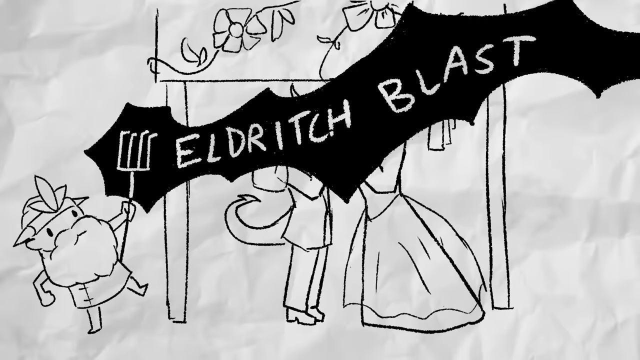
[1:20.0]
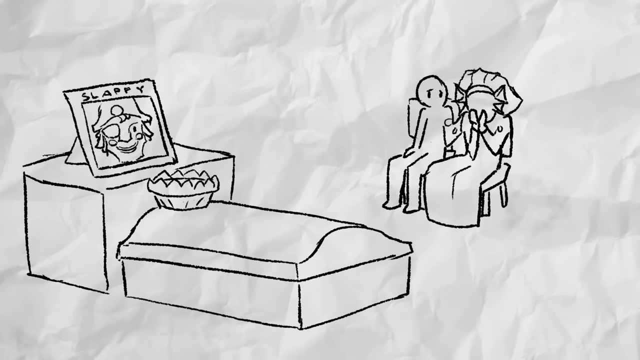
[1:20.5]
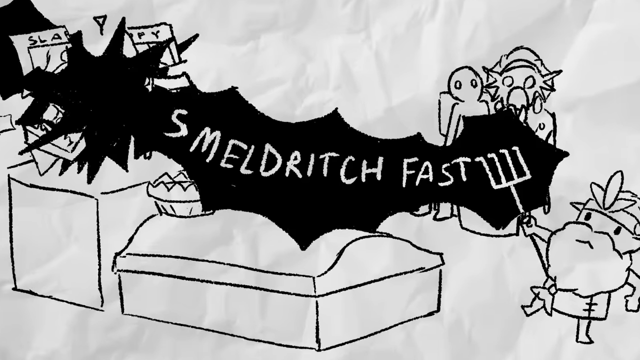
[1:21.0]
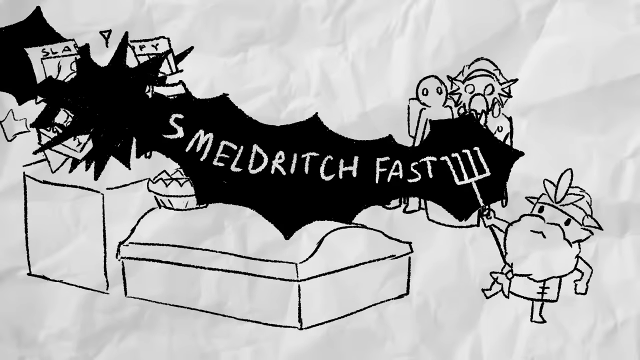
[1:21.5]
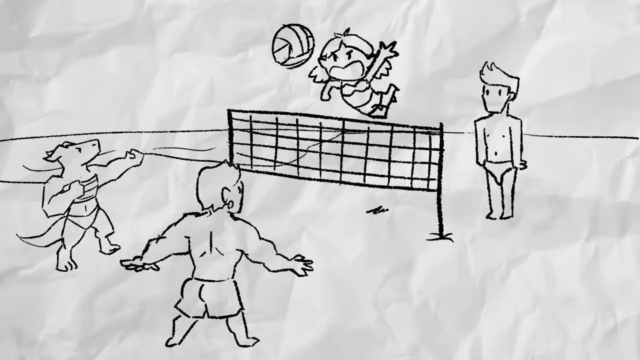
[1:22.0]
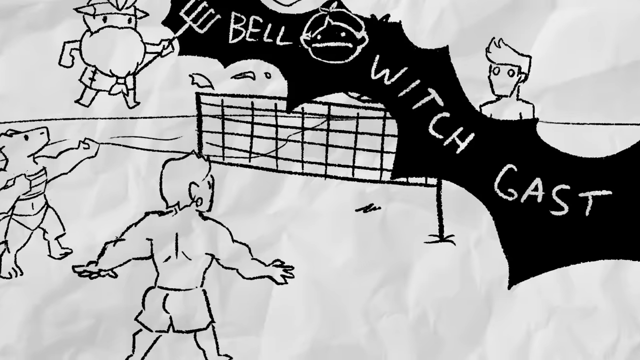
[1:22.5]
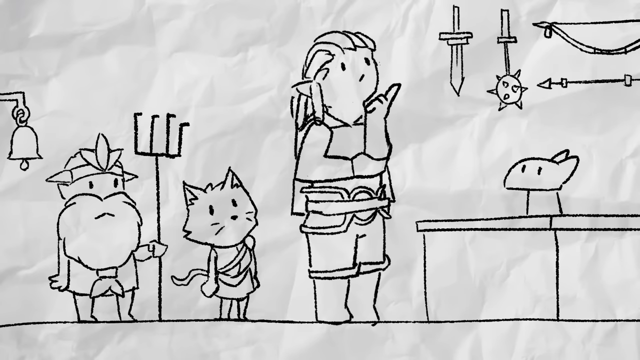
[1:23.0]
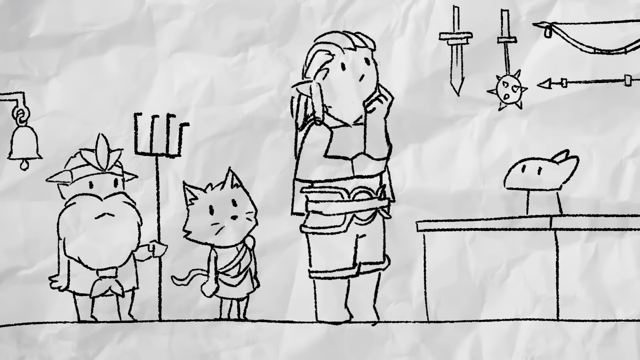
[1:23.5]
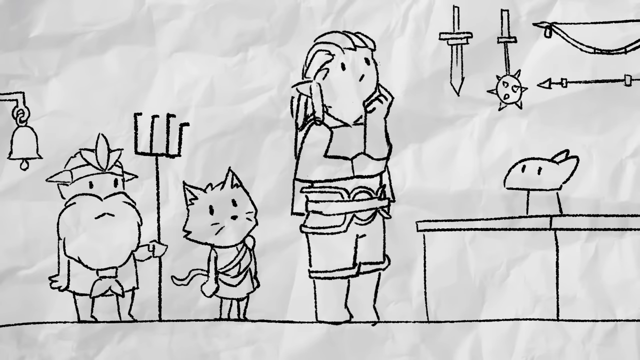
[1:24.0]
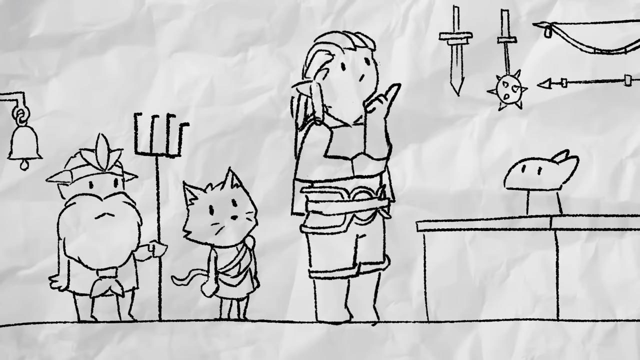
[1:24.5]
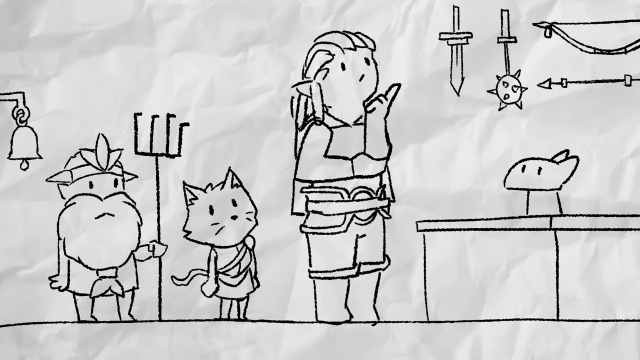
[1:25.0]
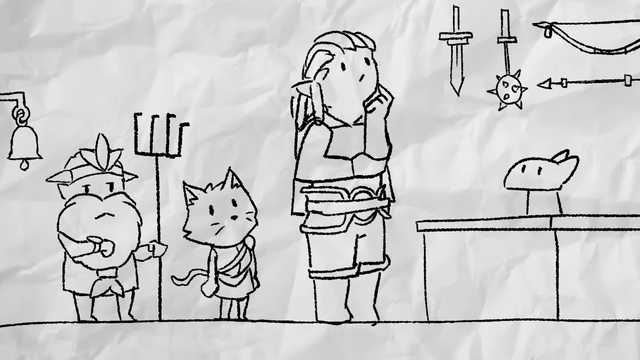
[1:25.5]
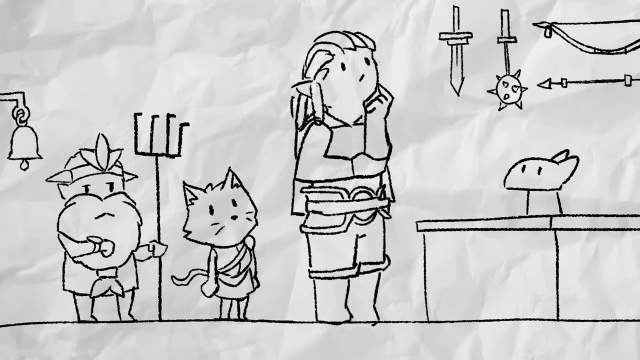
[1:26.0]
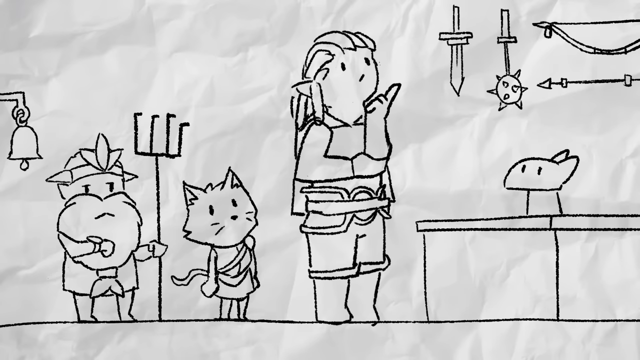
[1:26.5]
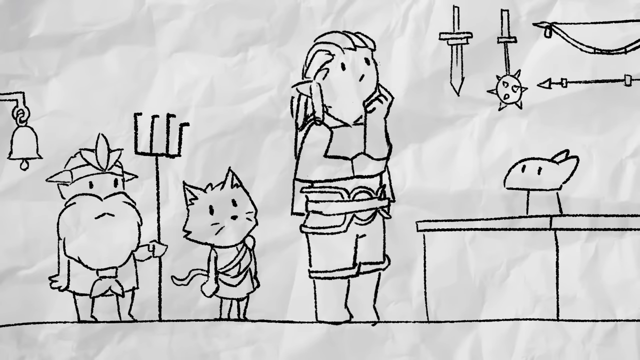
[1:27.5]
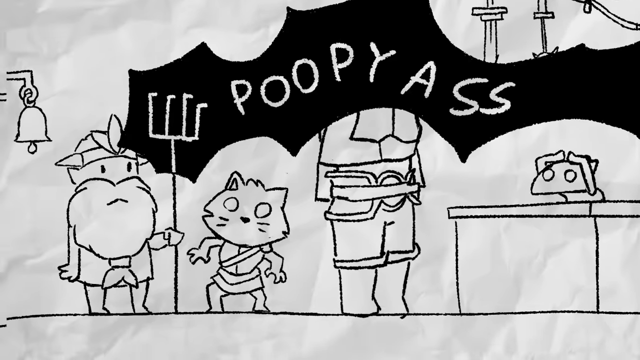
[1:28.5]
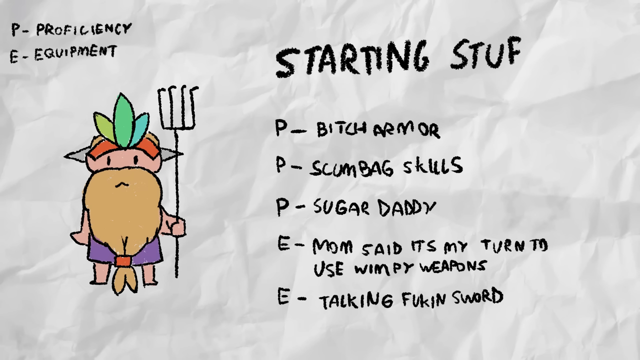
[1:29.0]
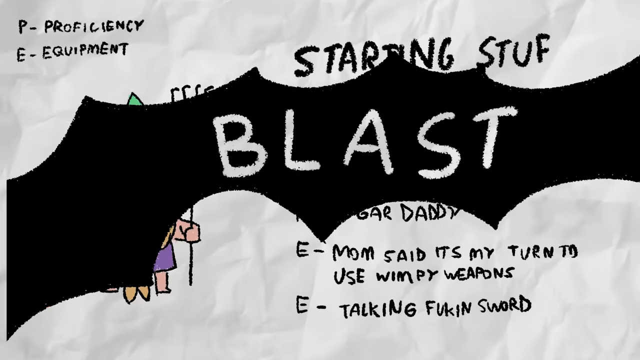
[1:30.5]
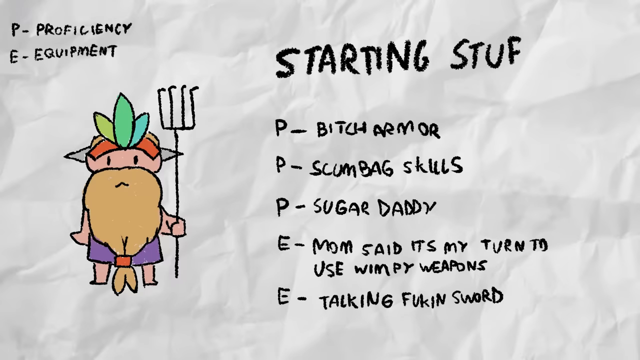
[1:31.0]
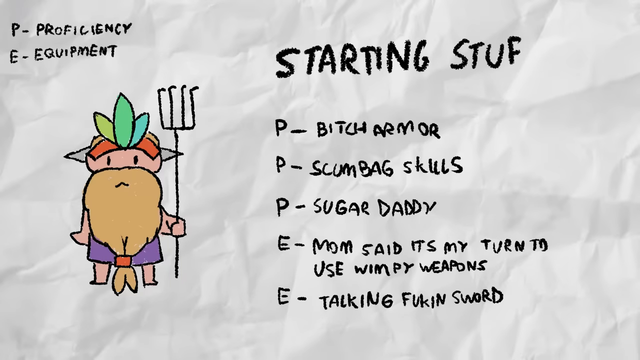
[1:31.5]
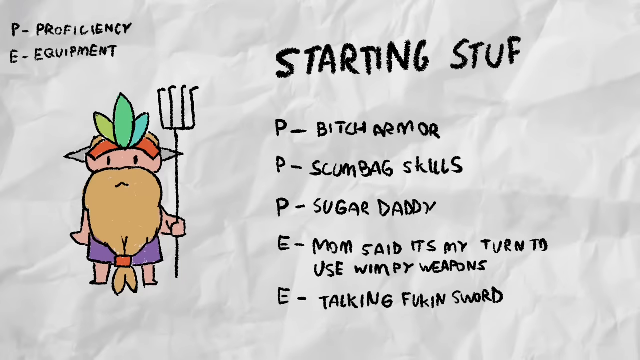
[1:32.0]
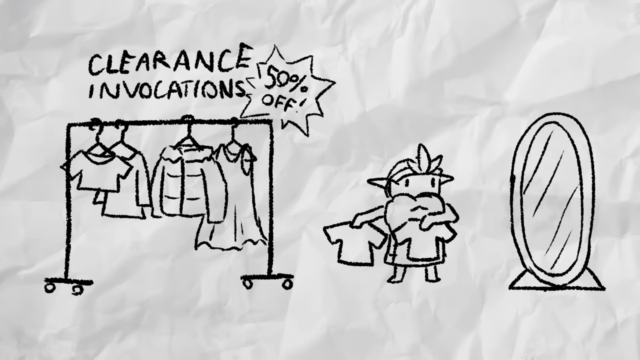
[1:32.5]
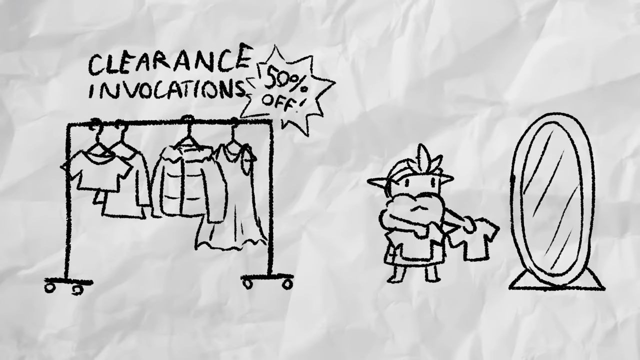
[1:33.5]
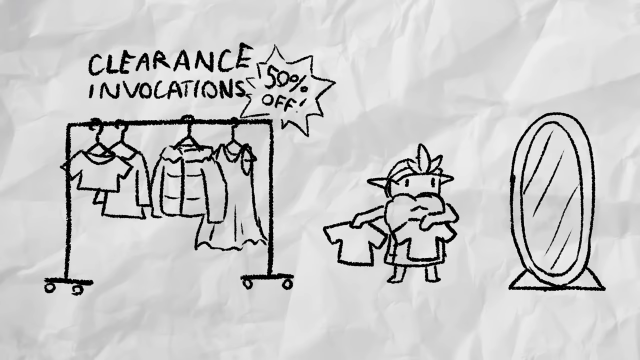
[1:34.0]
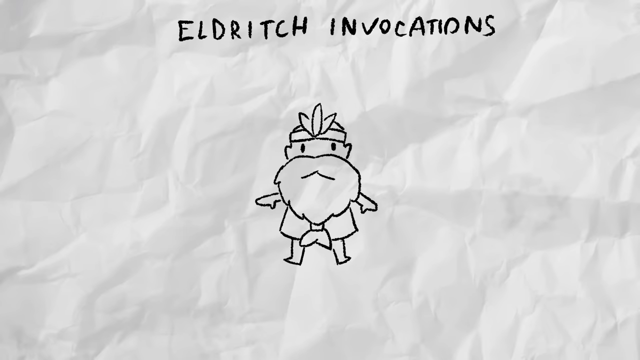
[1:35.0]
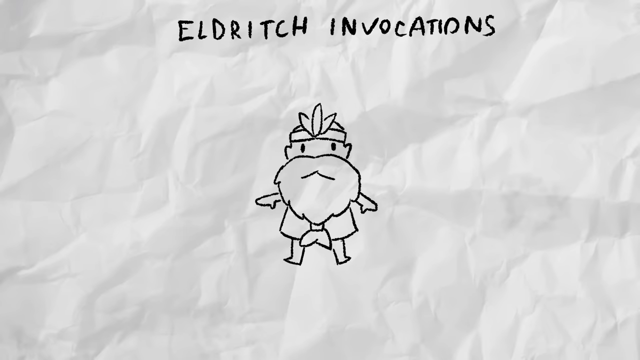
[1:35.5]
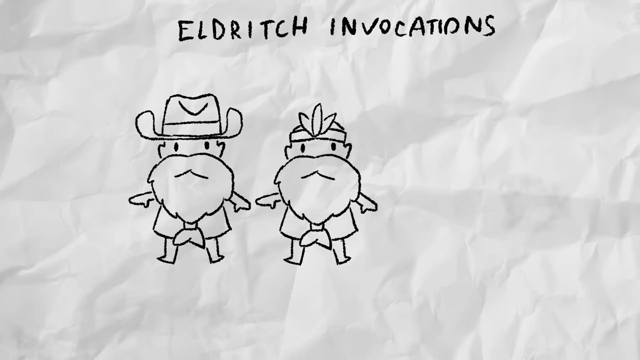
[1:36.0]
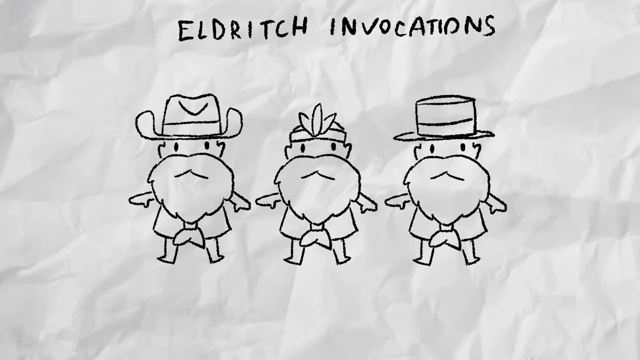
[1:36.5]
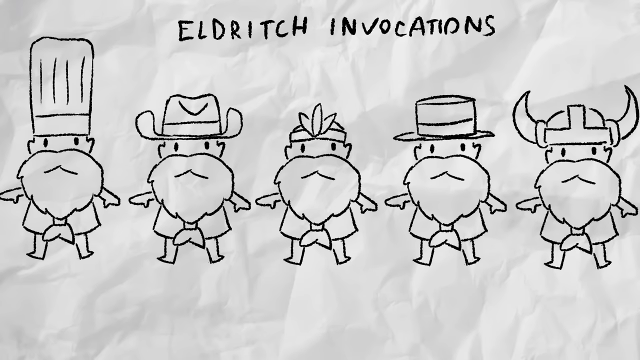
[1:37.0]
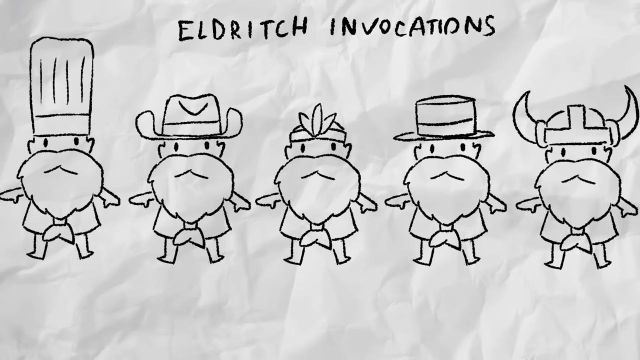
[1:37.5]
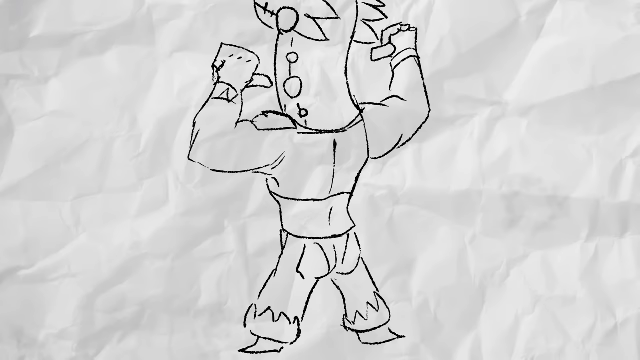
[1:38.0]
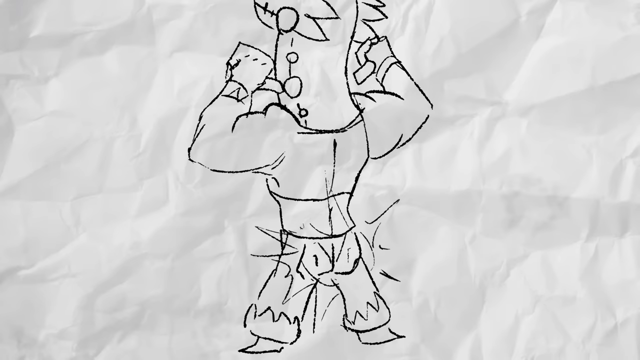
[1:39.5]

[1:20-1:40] A character casts a spell called Eldritch Blast over two other characters who are being married. The hand-drawn animation is on a crumpled white piece of paper and looks to be in black. The character casting the spell is a little man with a beard, using a pitchfork to cast the spell, and he has a little crown with leaves. He then casts spells in many different situations: on people looking at animals, people playing volleyball, and people at the beach on vacation. Many different versions of this character appear, showing what all the variations look like.